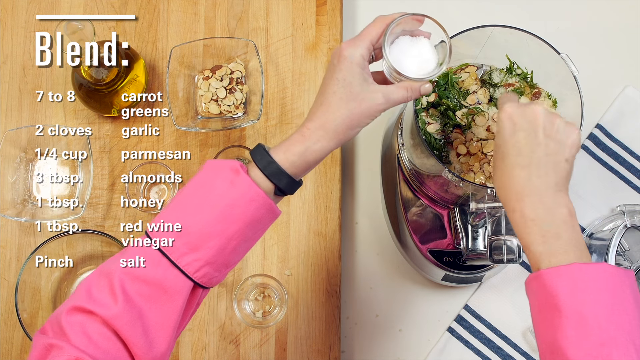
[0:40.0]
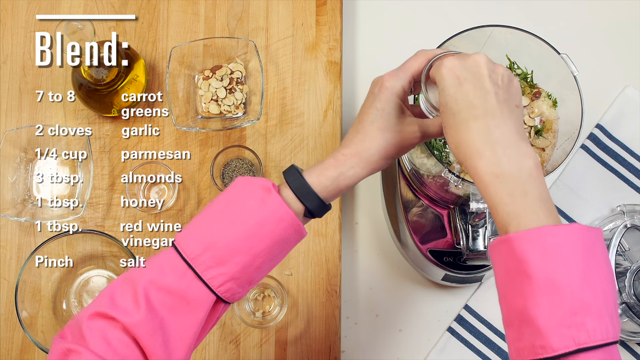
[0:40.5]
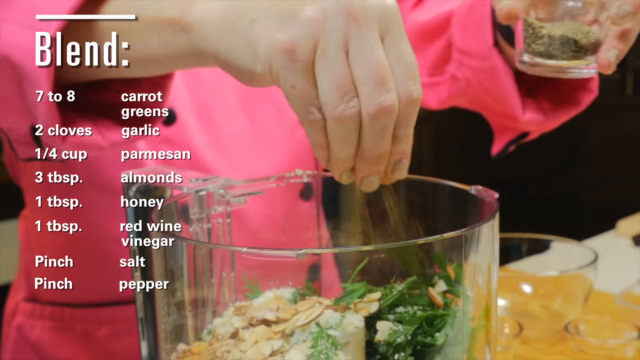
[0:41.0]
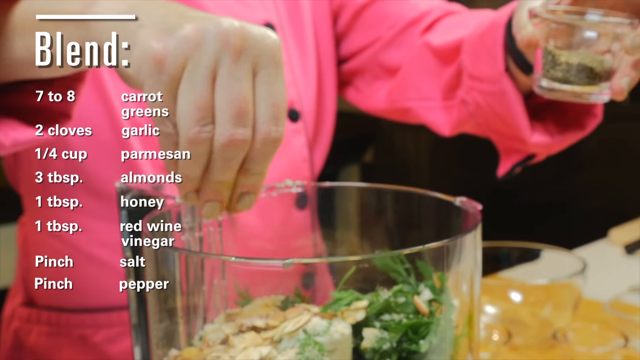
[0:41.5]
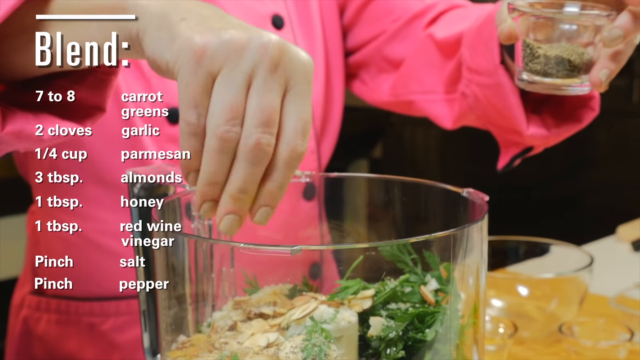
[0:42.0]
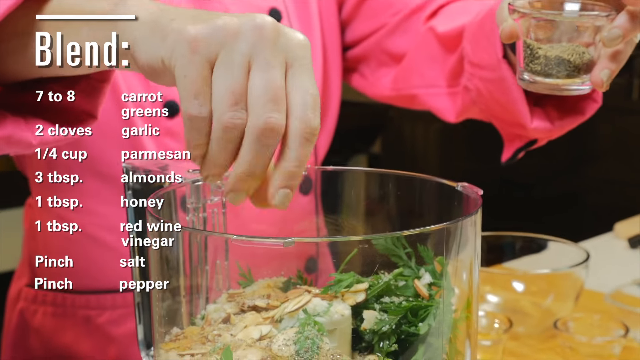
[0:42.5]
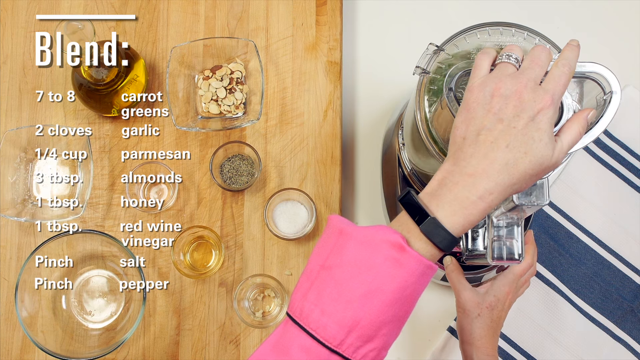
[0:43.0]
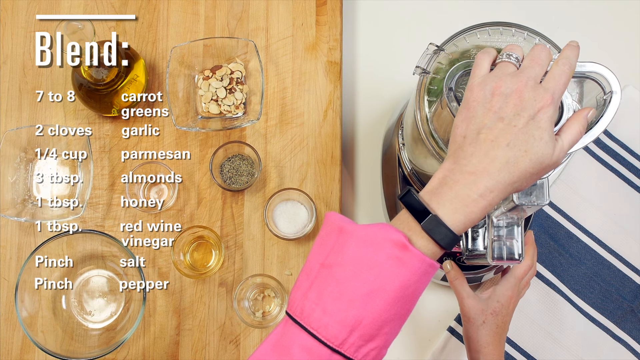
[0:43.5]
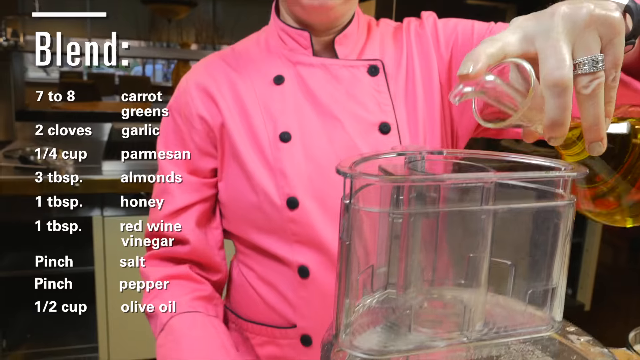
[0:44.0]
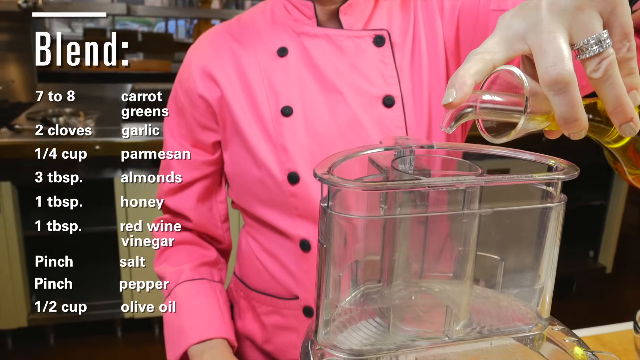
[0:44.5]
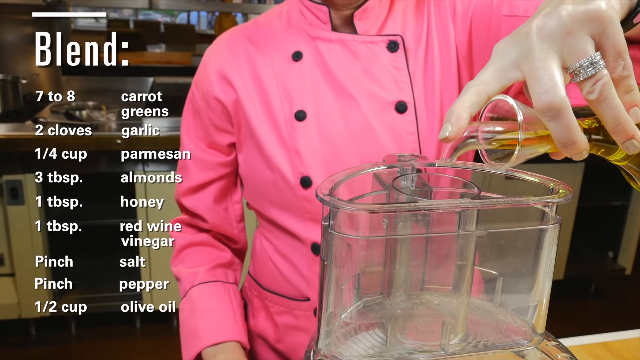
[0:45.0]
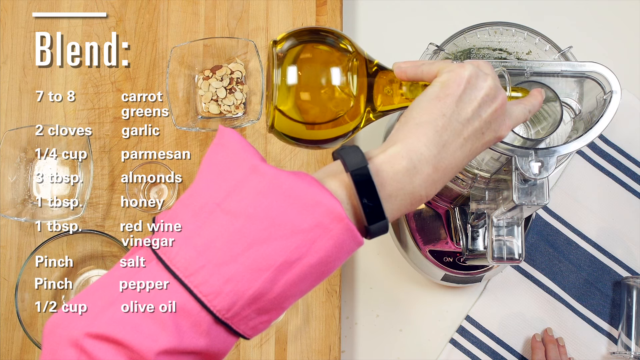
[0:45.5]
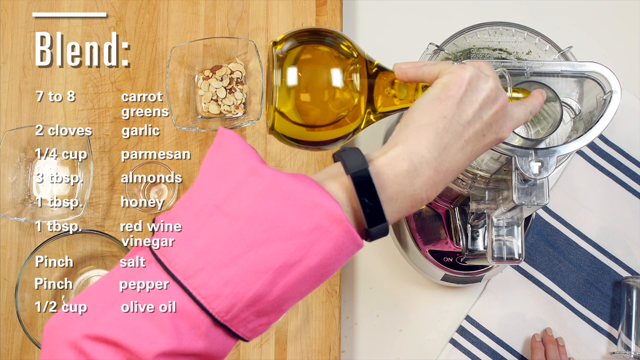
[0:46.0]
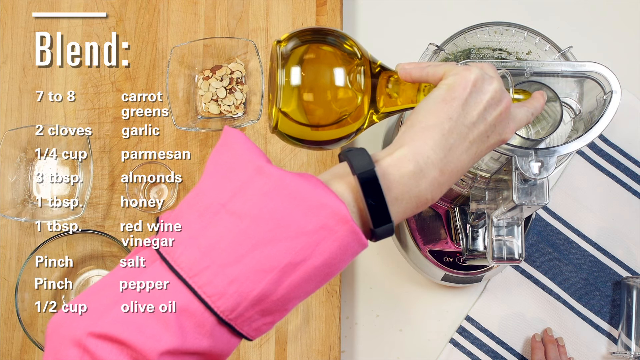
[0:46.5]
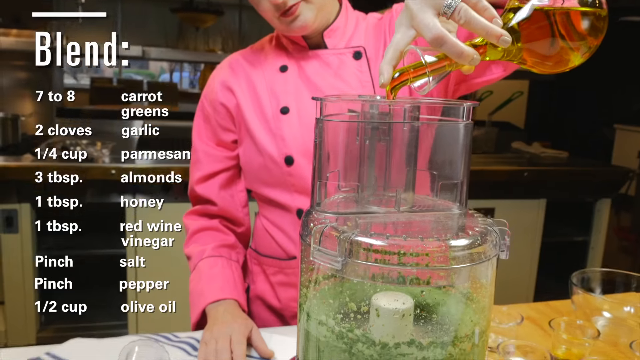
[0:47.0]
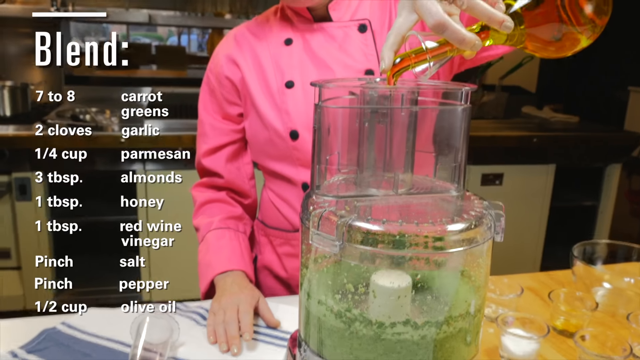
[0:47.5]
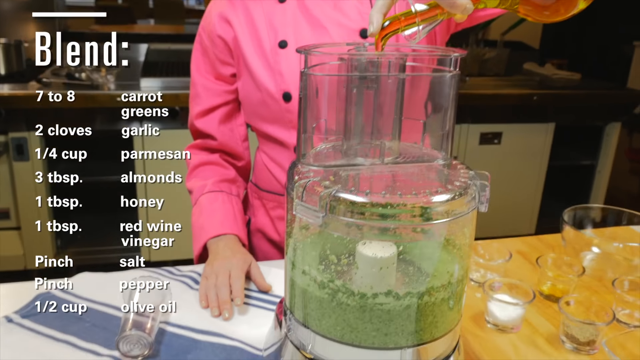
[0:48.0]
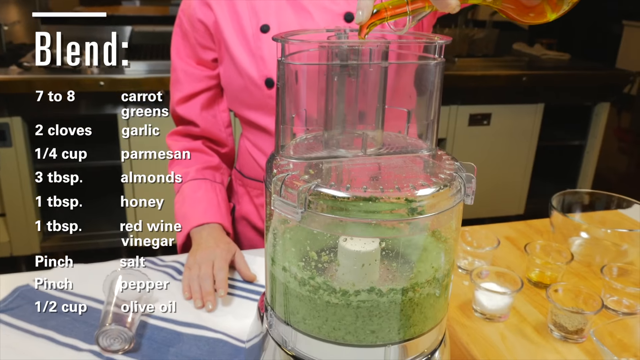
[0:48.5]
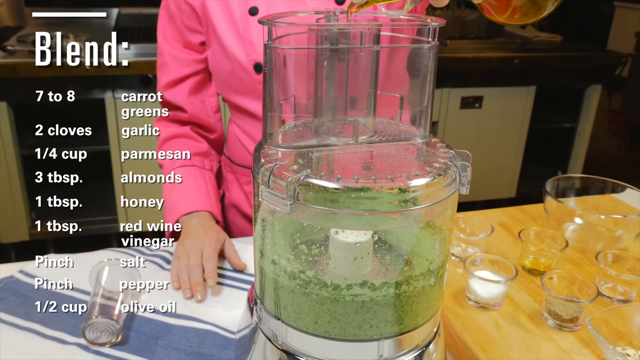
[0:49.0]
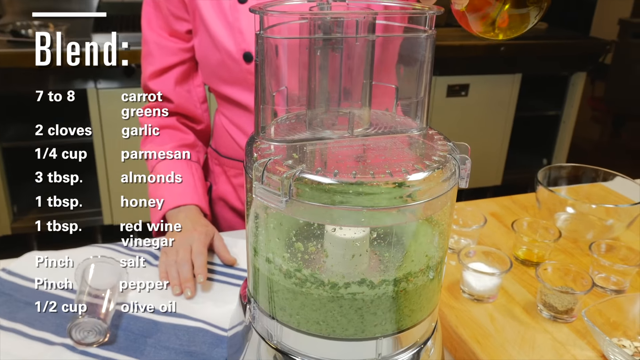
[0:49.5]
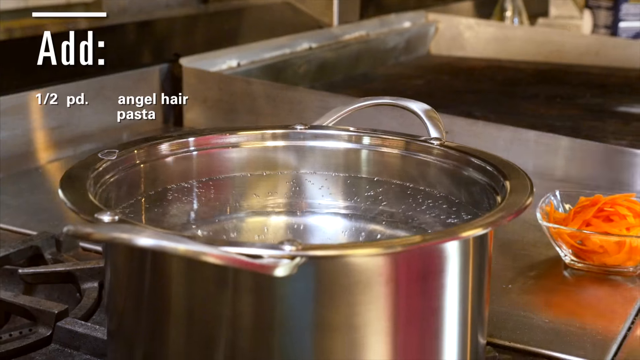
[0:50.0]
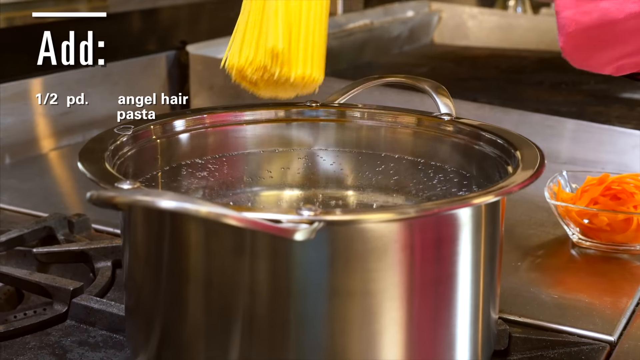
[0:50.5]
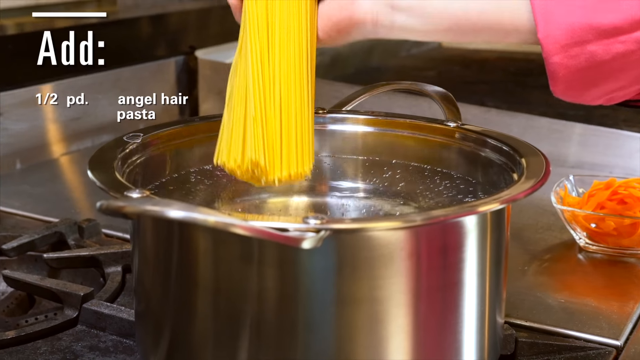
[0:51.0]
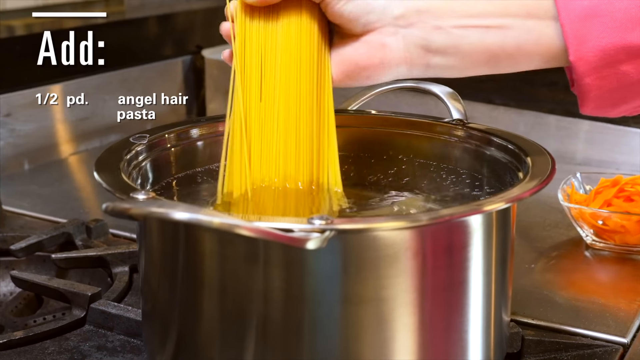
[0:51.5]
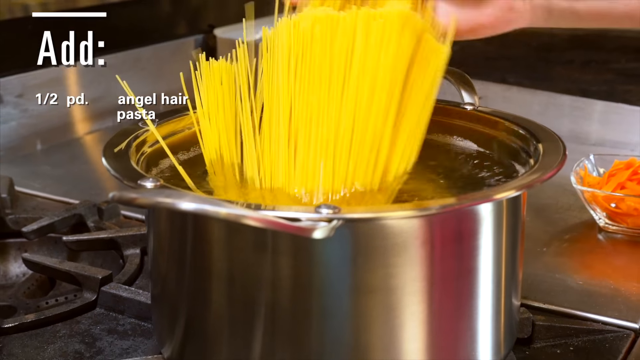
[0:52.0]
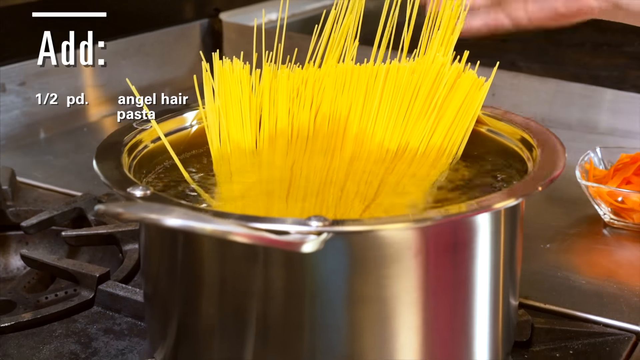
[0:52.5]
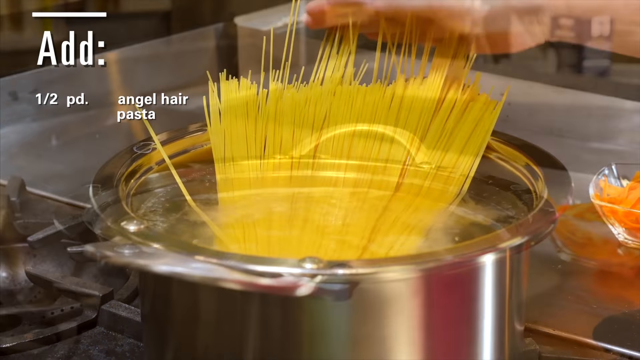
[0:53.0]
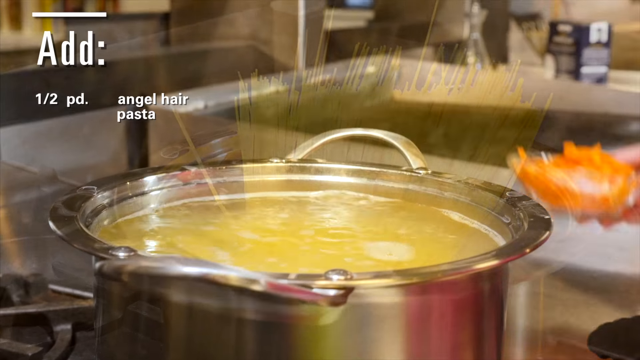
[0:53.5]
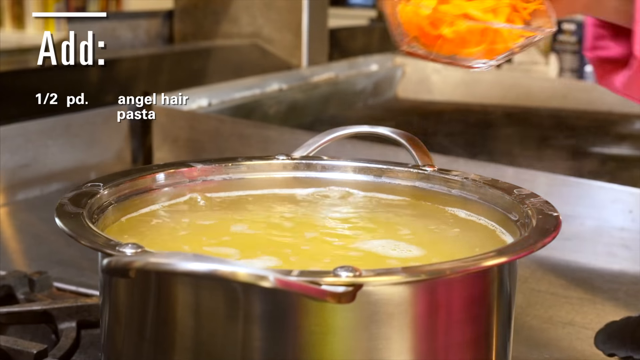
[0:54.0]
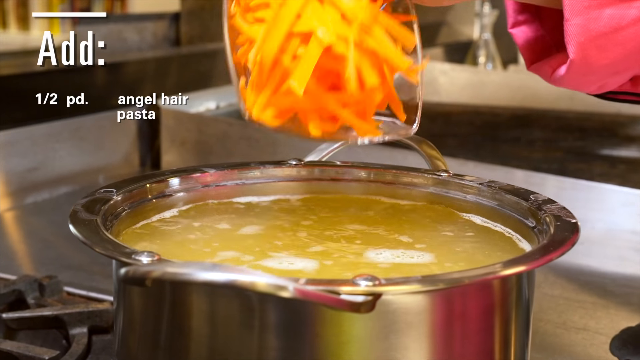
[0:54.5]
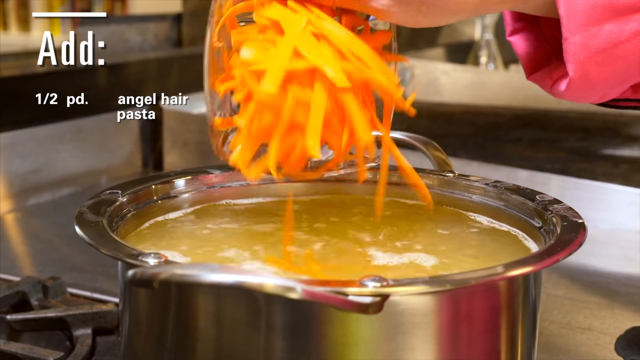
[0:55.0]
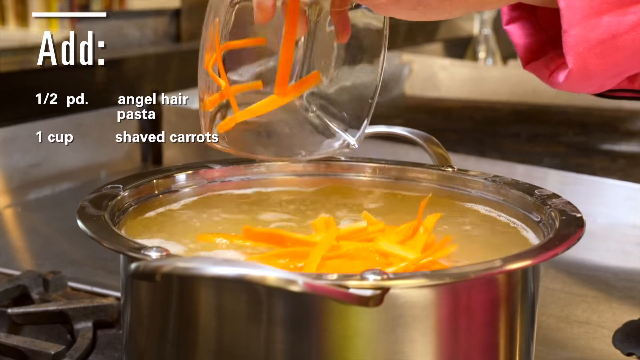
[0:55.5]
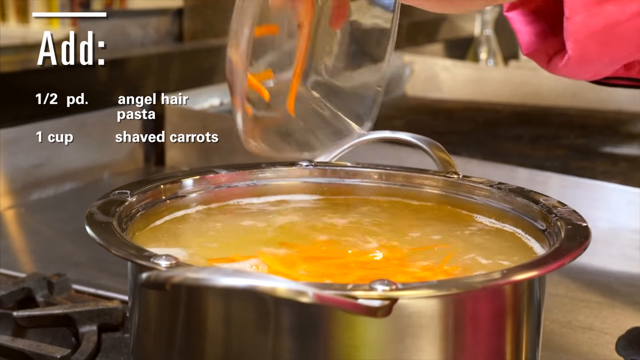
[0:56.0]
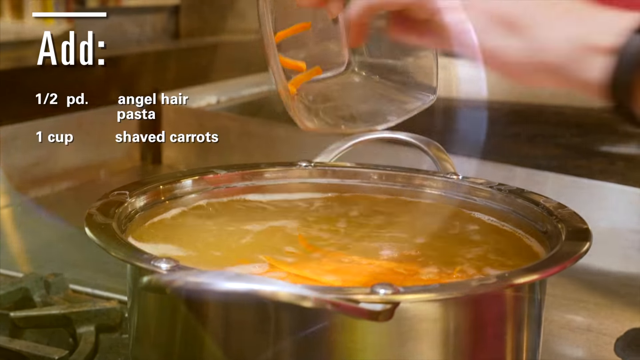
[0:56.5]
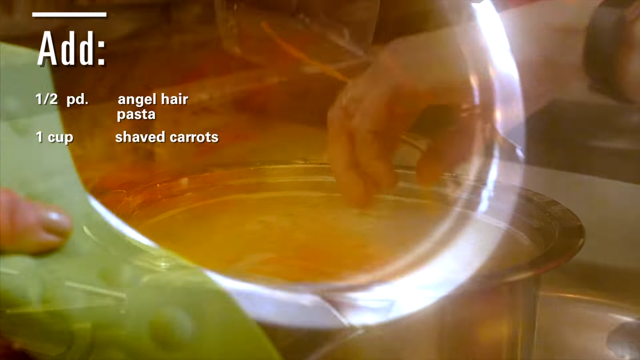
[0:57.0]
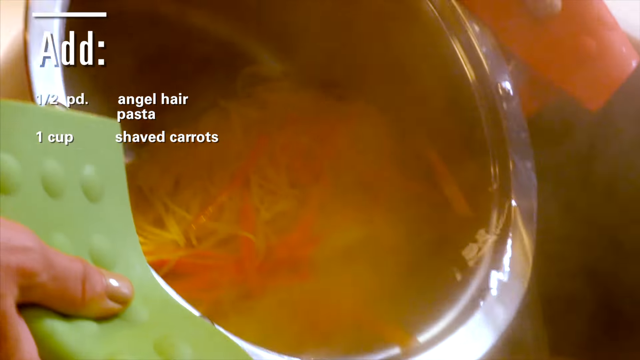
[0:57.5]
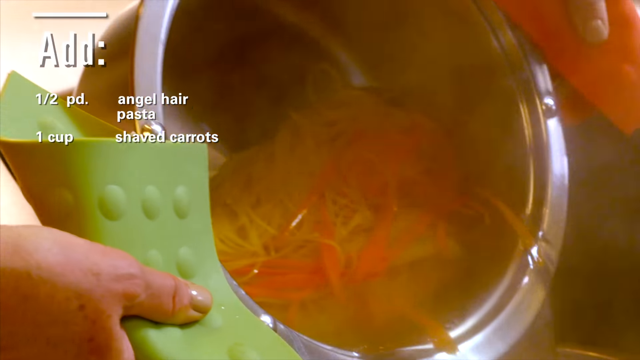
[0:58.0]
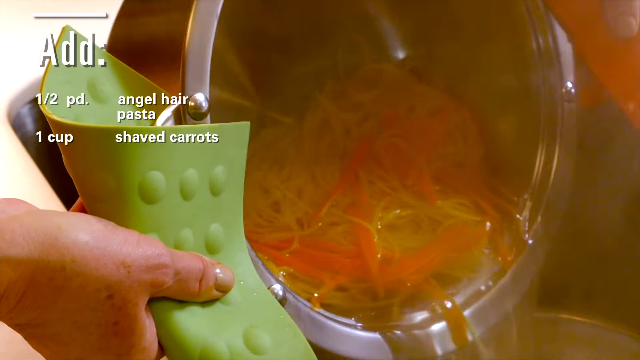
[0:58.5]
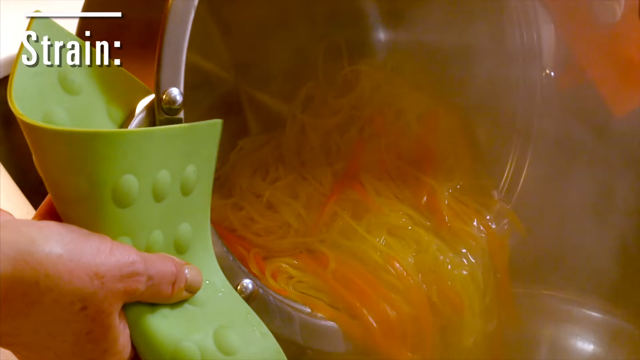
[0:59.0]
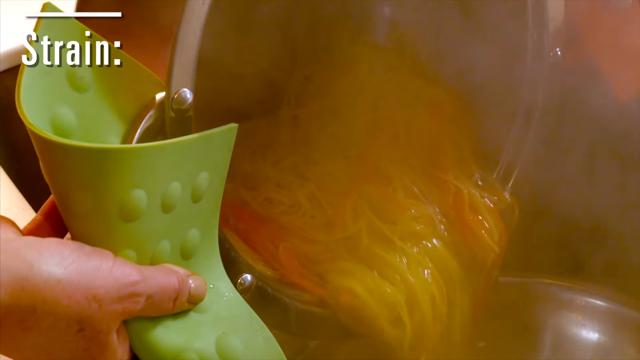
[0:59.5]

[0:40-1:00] Two hands in pink sleeves, one wearing a black watch, hold a clear cup of salt and add it to a blender full of food. The camera shifts through many shots as the food in the blender is blended, and olive oil is added to the blender as it blends. The process is recorded from many angles to show the full detail, and white text on the left of the screen lists everything the hands put in. The scene then shifts to a boiling metal pot on a stove, with a clear bowl of carrot strips visible in the background. A hand adds what looks like yellow noodles, apparently pasta. Next, the pasta is already boiling, and the hand adds the carrot strips from the clear bowl. The scene then changes to a close-up of the pot with all the pasta and carrots in it.